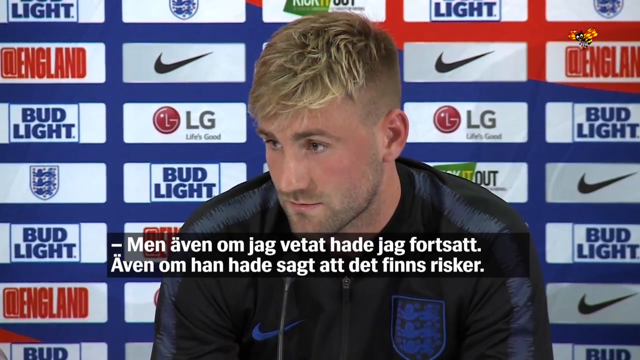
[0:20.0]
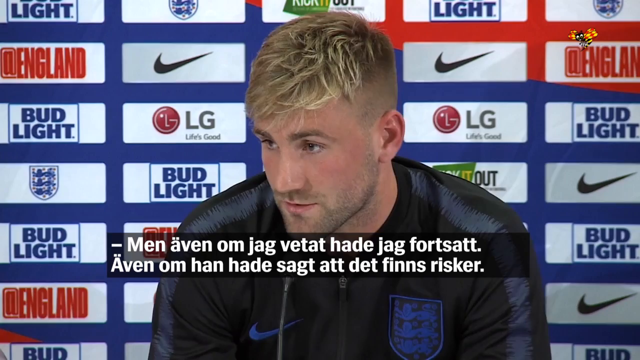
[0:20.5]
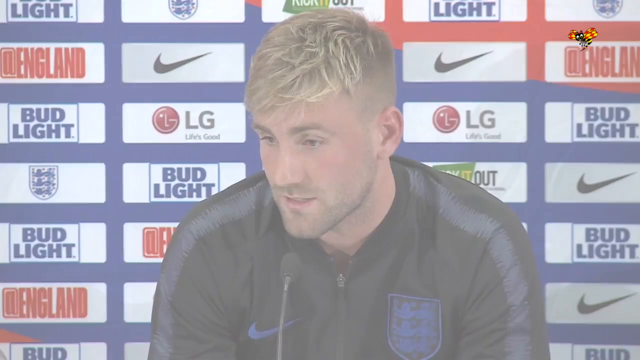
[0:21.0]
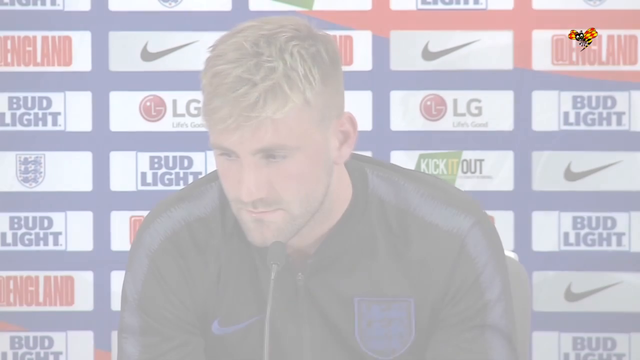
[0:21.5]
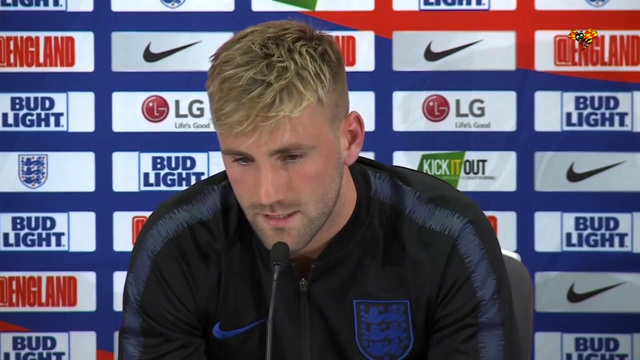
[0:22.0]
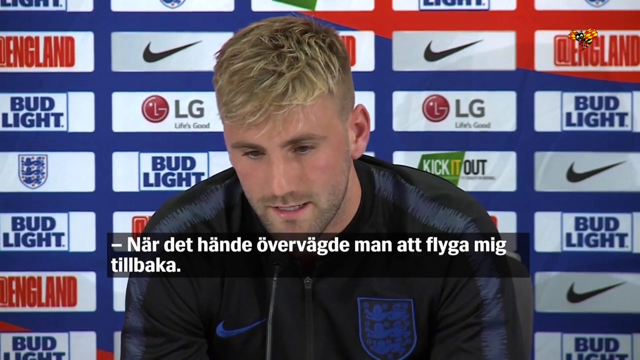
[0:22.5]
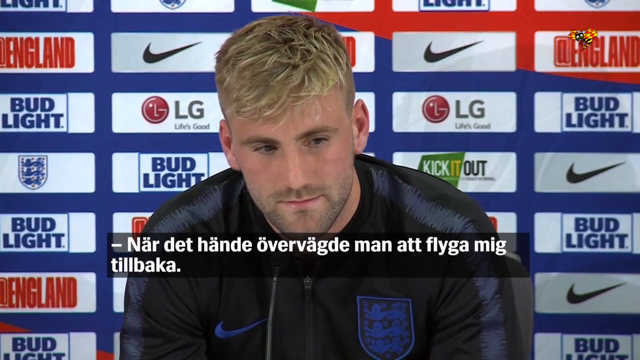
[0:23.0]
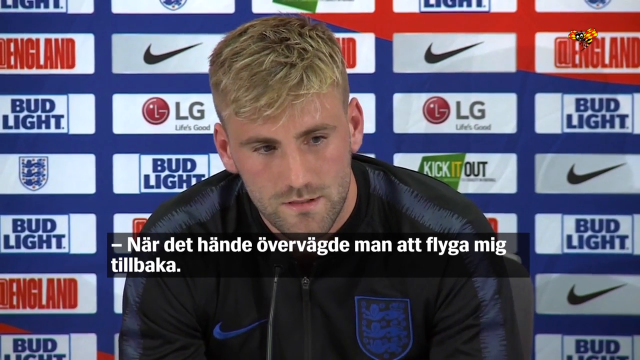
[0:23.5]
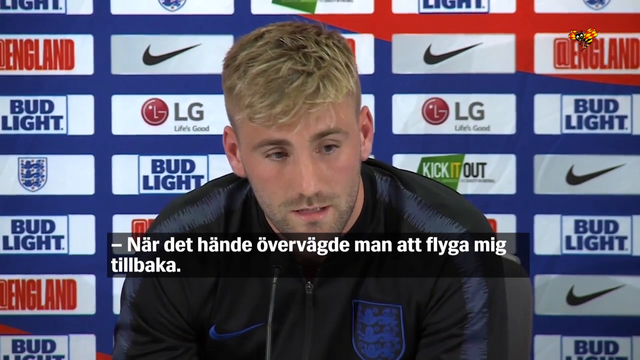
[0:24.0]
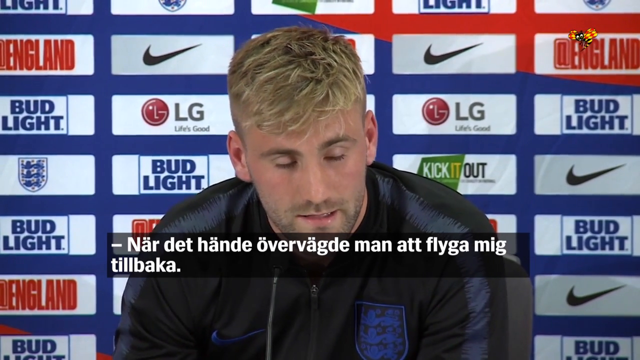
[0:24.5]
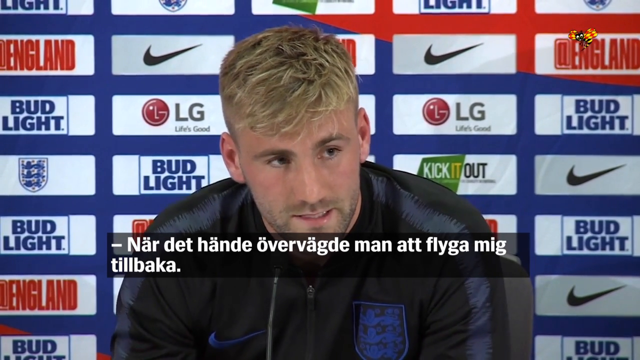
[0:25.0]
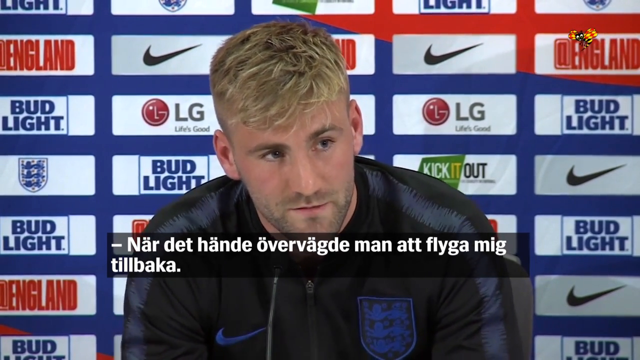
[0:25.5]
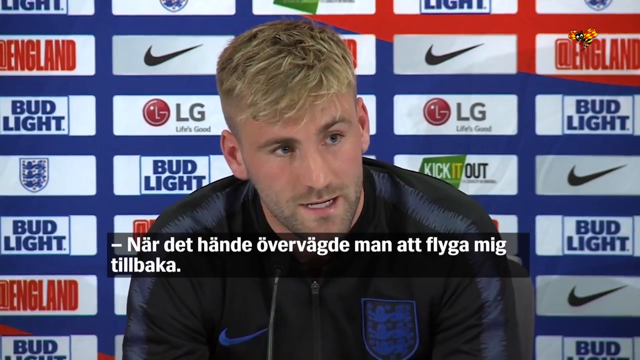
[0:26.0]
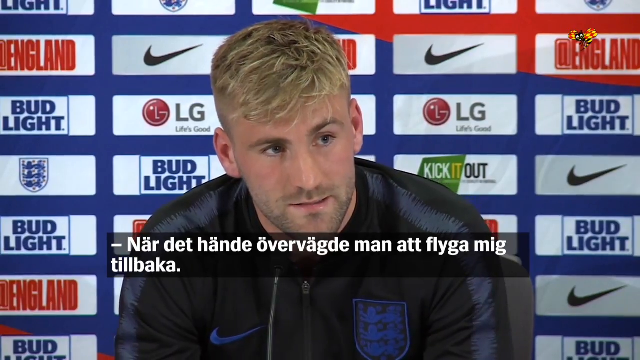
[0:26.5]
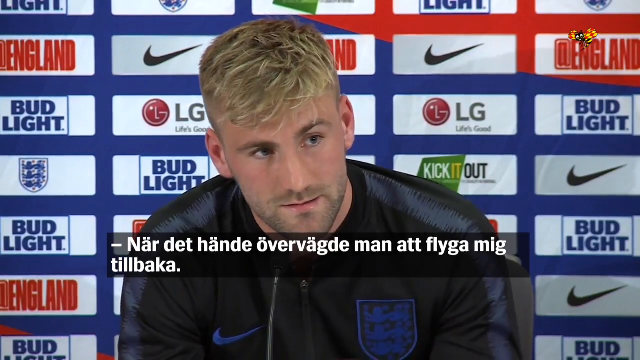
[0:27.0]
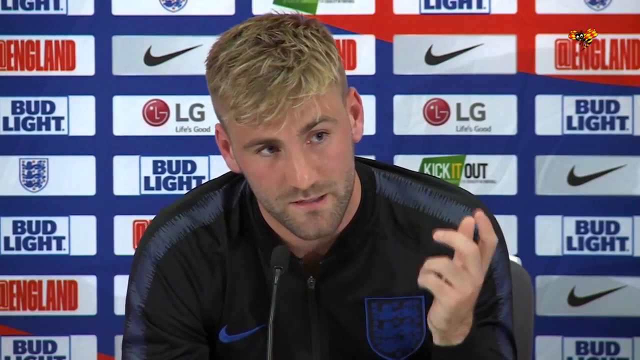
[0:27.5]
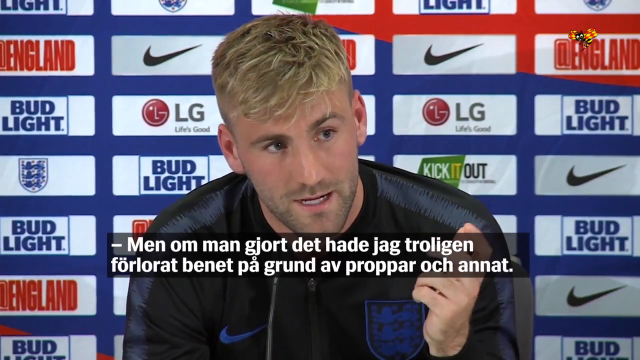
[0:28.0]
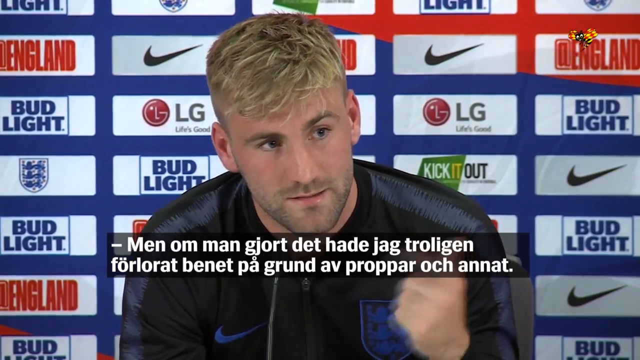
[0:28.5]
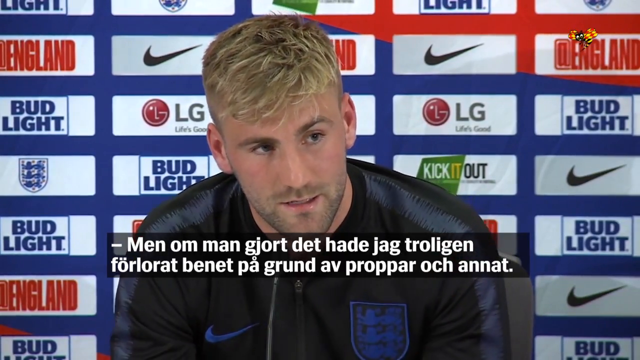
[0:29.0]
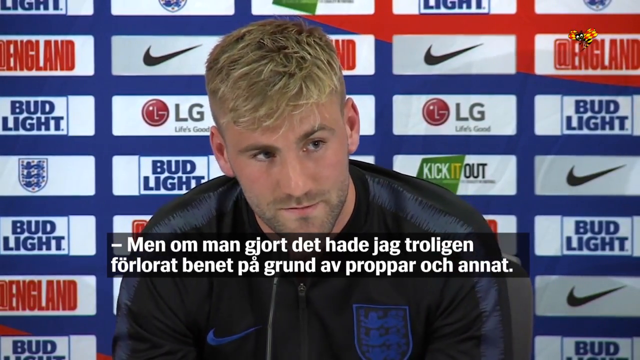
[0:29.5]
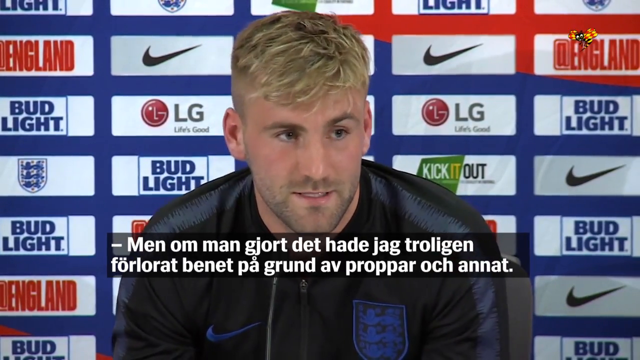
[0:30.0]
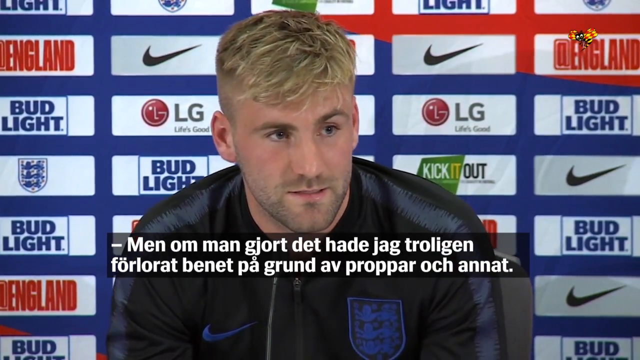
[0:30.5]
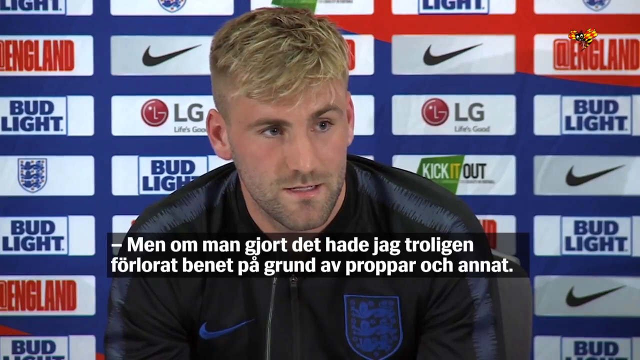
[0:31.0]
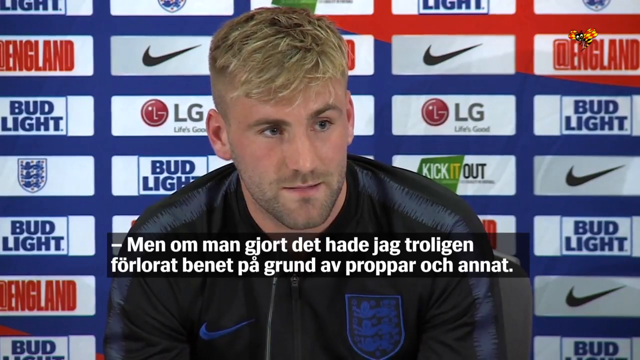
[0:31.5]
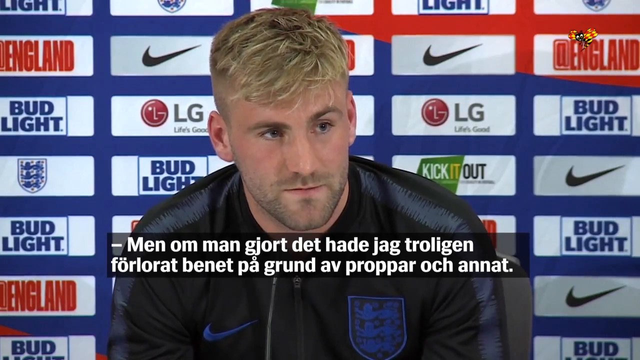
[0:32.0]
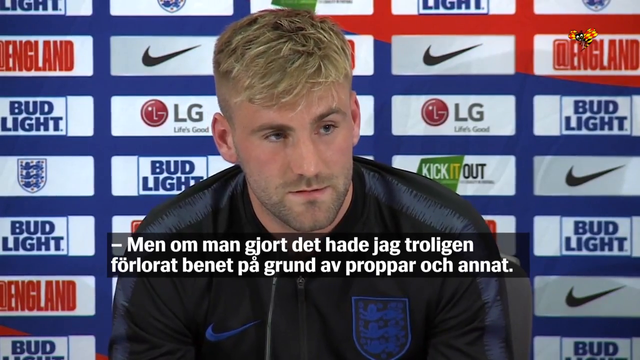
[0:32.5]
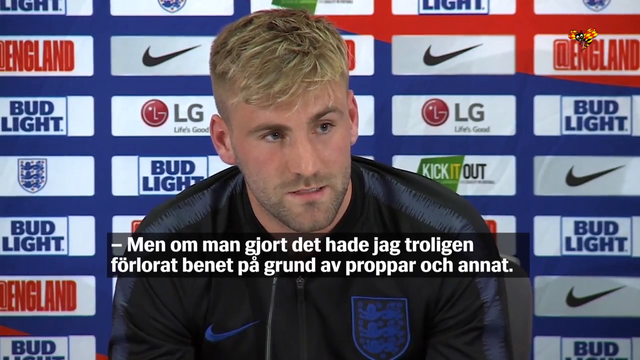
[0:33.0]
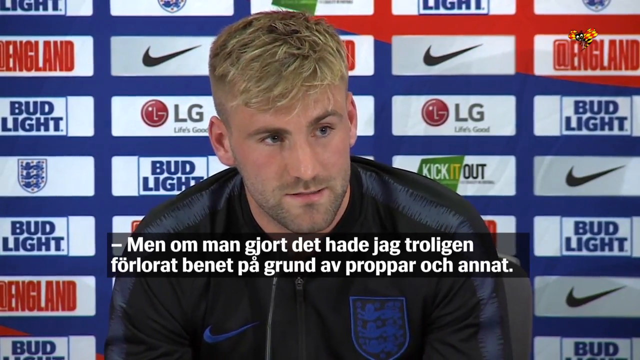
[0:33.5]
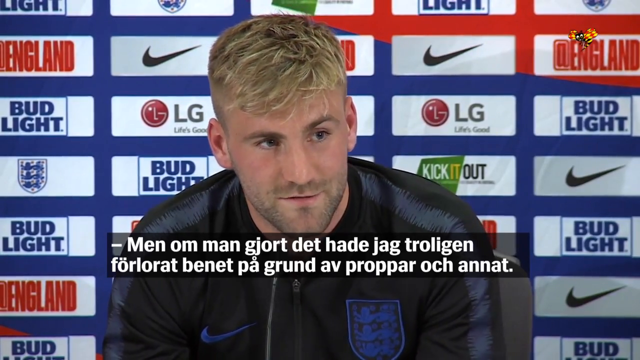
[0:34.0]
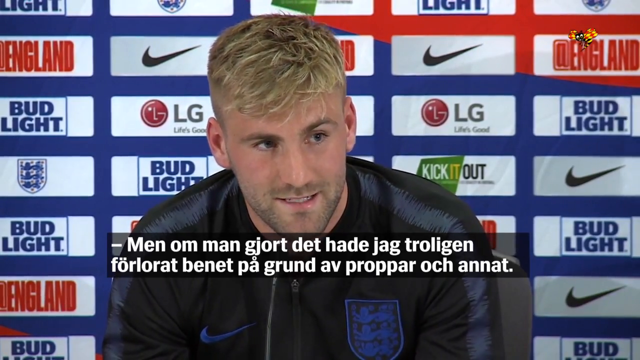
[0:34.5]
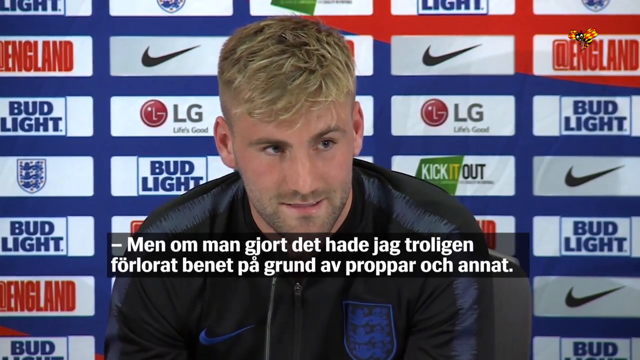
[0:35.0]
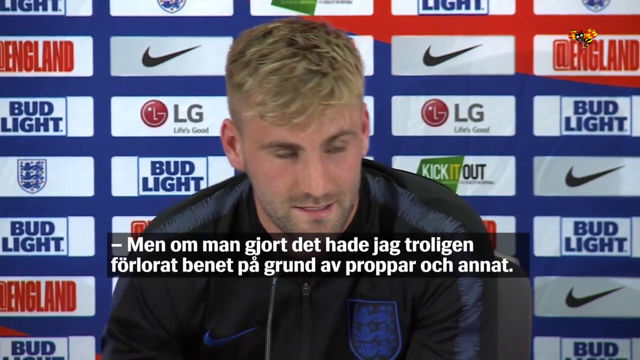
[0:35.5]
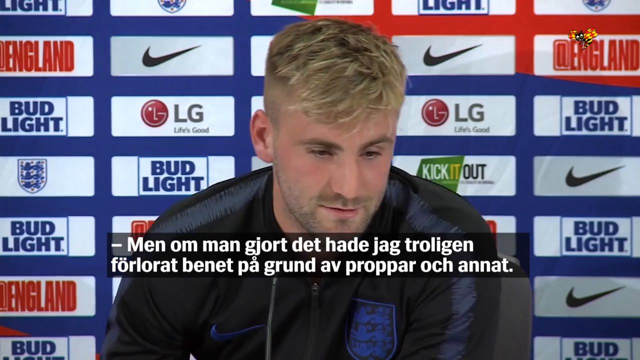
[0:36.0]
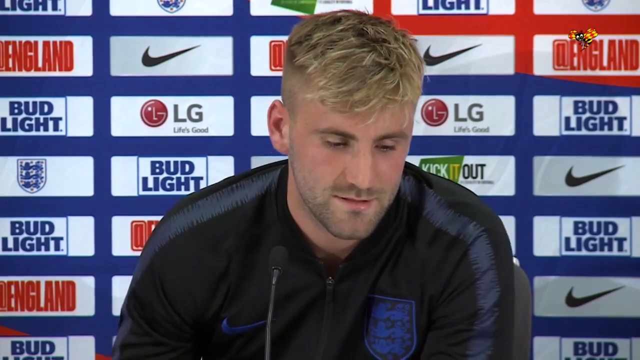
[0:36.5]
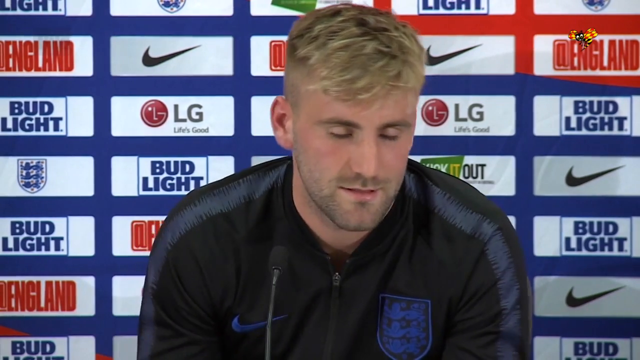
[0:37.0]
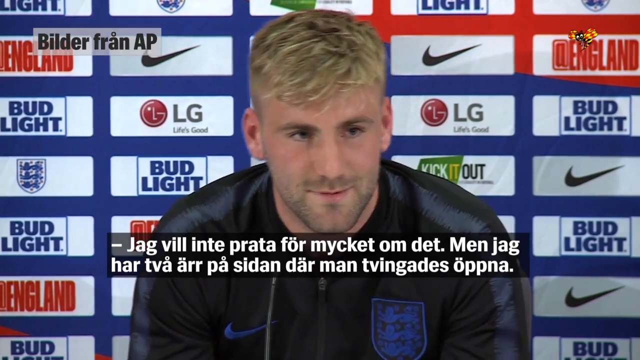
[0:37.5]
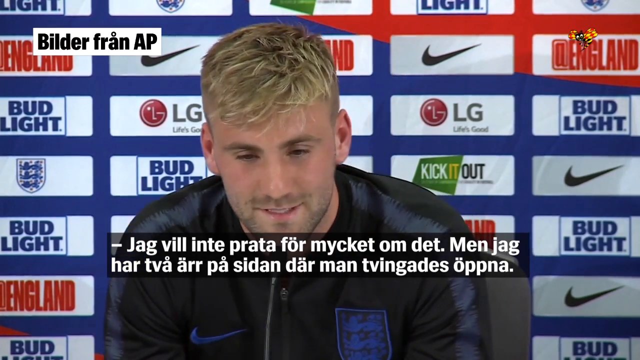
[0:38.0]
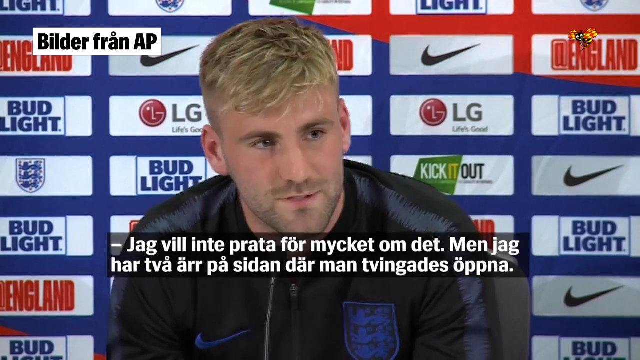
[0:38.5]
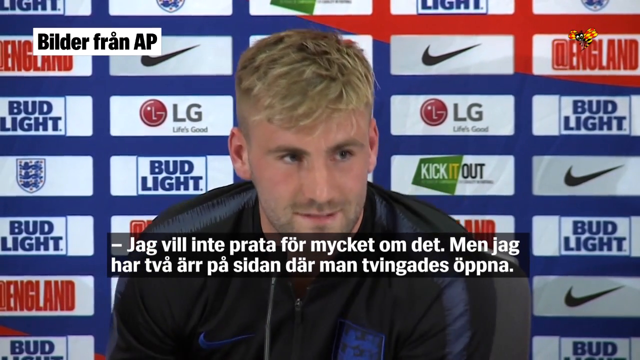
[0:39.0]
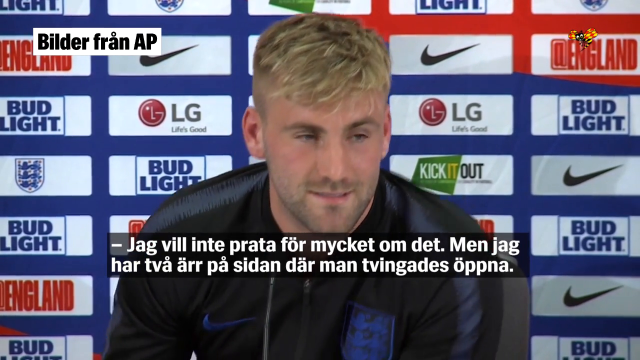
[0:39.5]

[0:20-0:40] Luke Shaw, a man with blonde hair and a beard, is a football or soccer player for the English national football team. Behind him are many sponsors, such as Nike, England, LG with "Life's Good," and Bud Light, along with the crest of the English national football team. Subtitles in a language other than English appear on screen, possibly for viewers in another country. He sort of looks to the left while speaking into the microphone, using hand movements as he talks, possibly looking toward the interviewers asking questions. His shirt is black with a gray stripe and shows the England crest and the Nike logo.